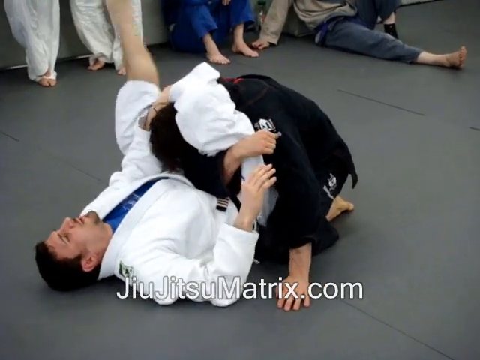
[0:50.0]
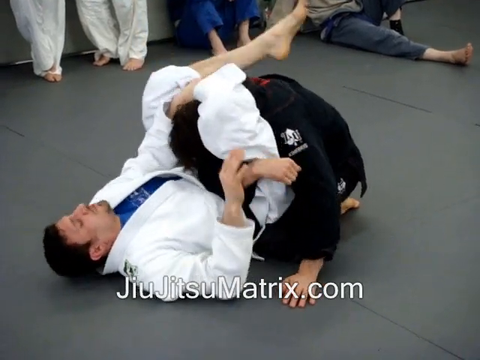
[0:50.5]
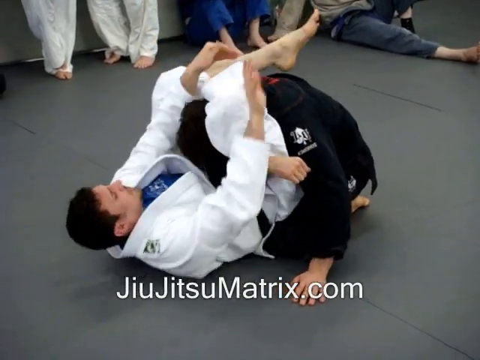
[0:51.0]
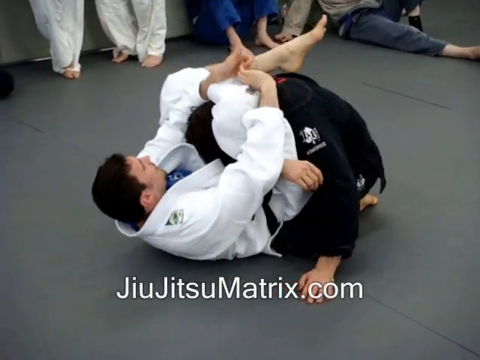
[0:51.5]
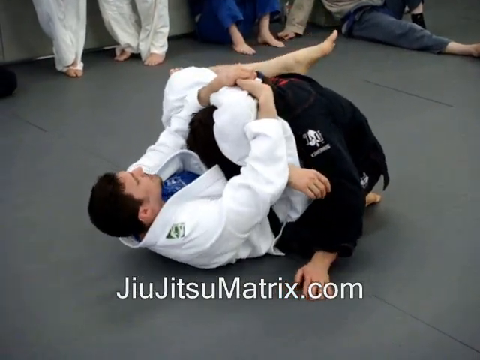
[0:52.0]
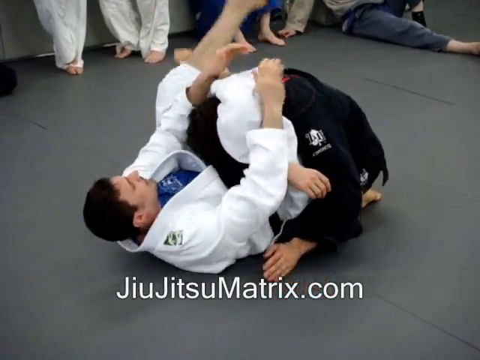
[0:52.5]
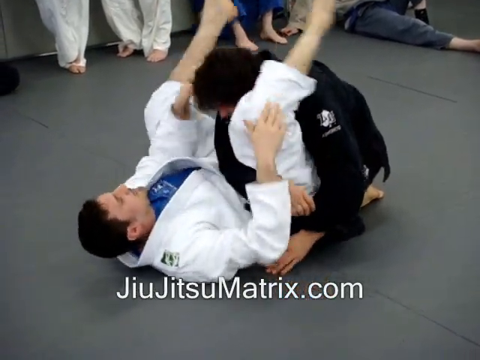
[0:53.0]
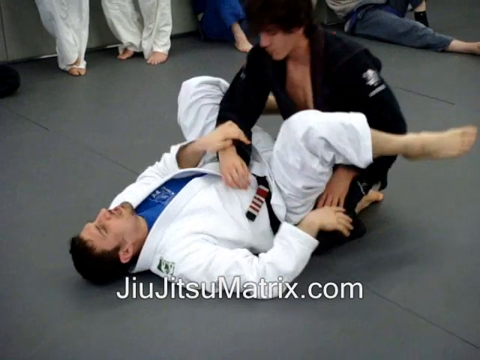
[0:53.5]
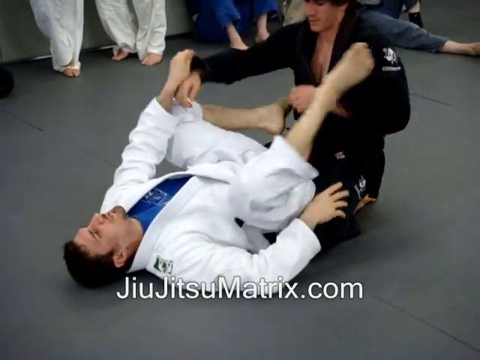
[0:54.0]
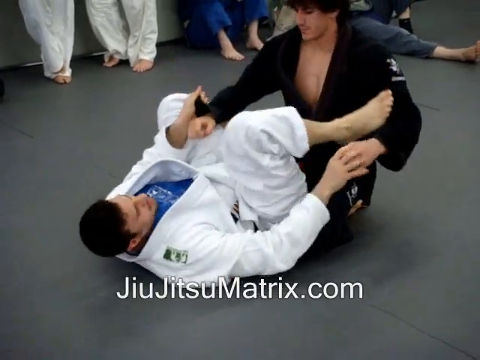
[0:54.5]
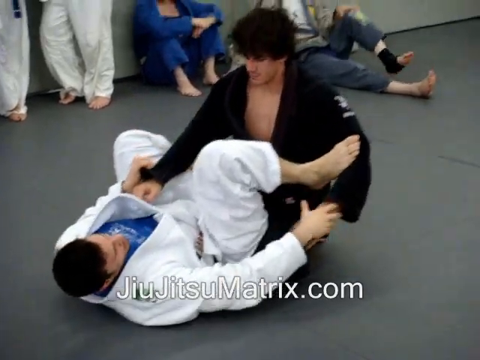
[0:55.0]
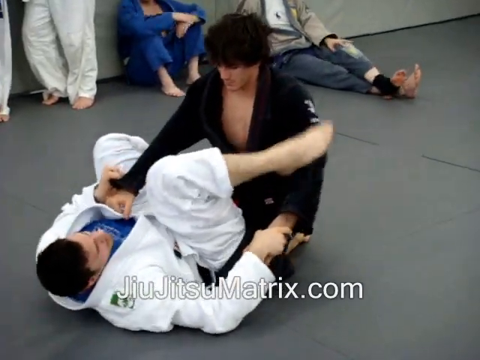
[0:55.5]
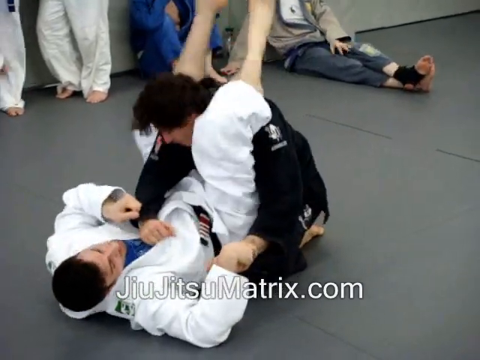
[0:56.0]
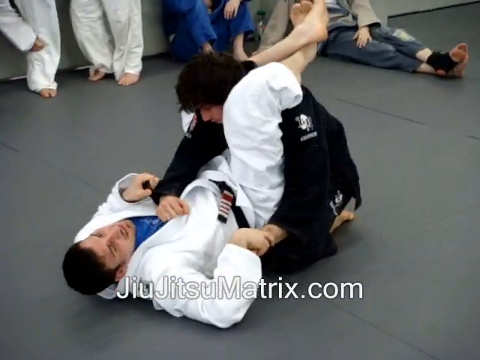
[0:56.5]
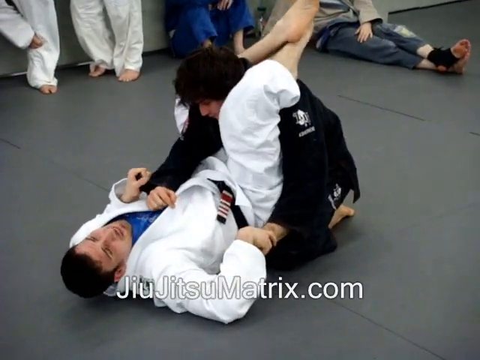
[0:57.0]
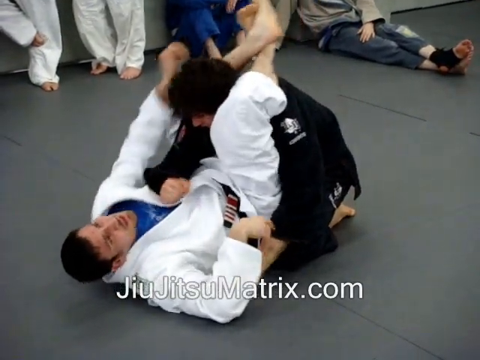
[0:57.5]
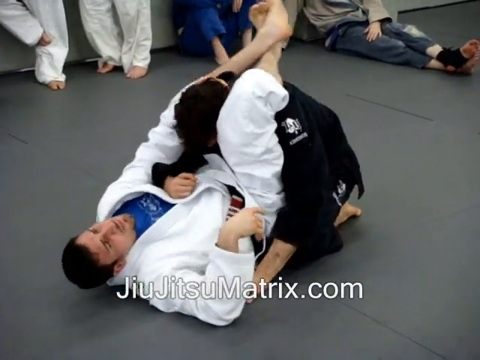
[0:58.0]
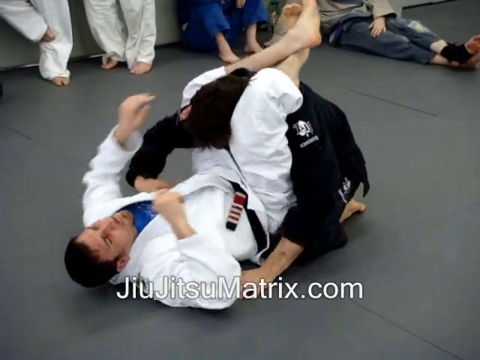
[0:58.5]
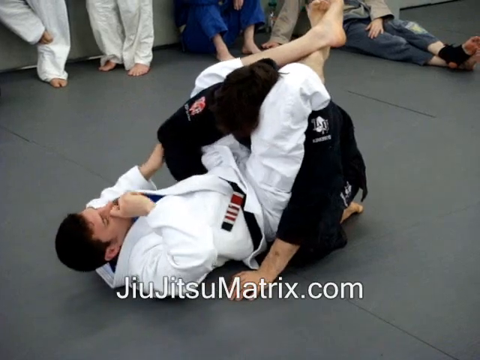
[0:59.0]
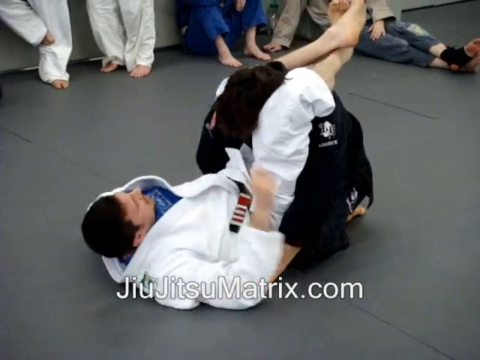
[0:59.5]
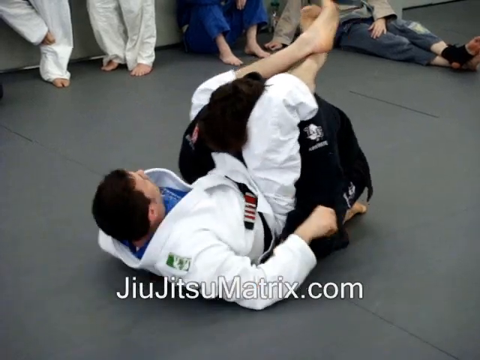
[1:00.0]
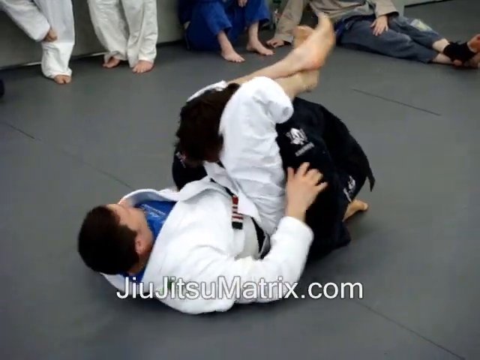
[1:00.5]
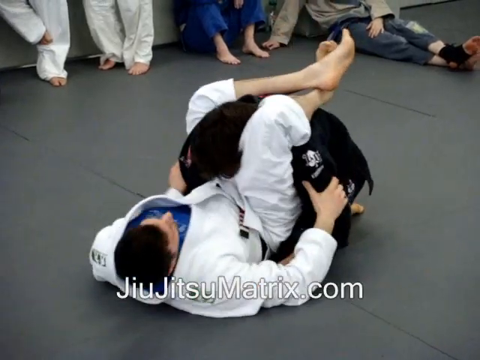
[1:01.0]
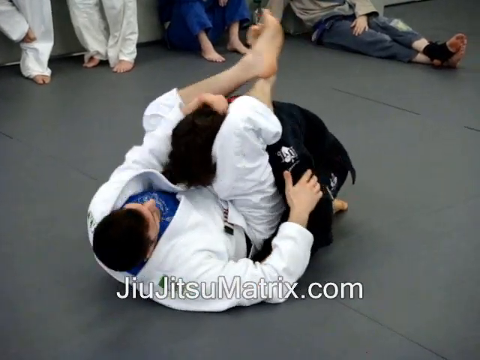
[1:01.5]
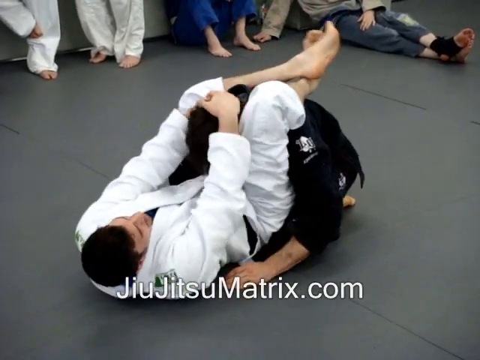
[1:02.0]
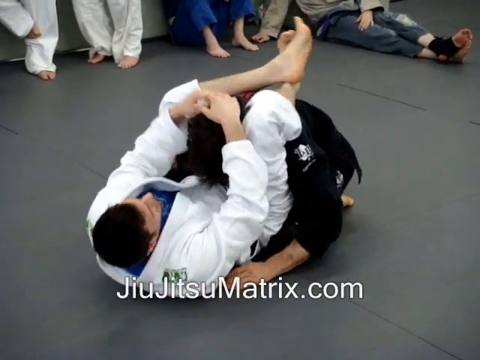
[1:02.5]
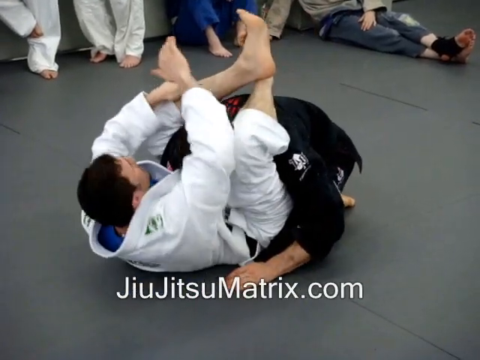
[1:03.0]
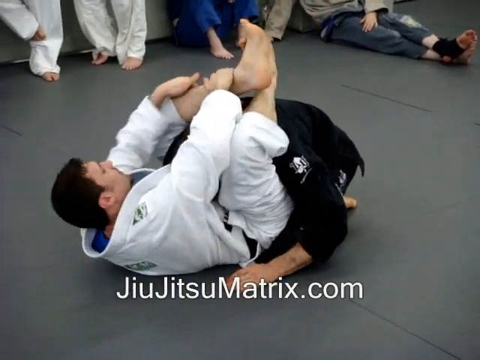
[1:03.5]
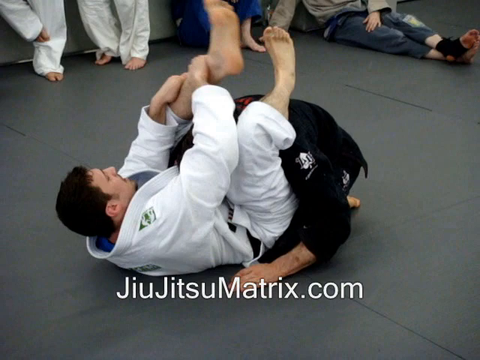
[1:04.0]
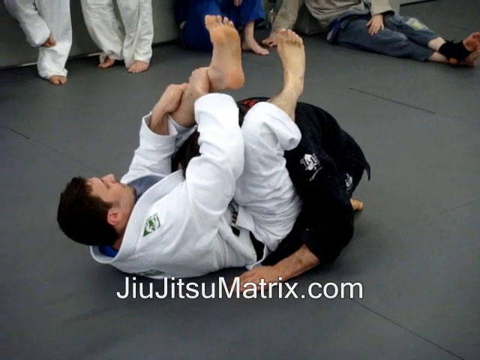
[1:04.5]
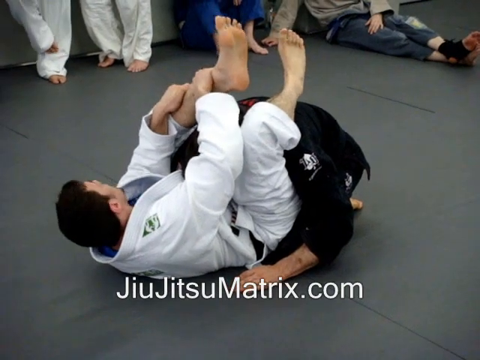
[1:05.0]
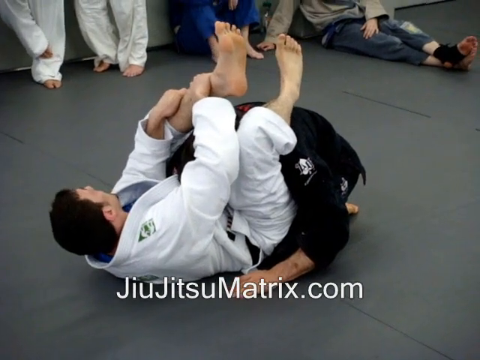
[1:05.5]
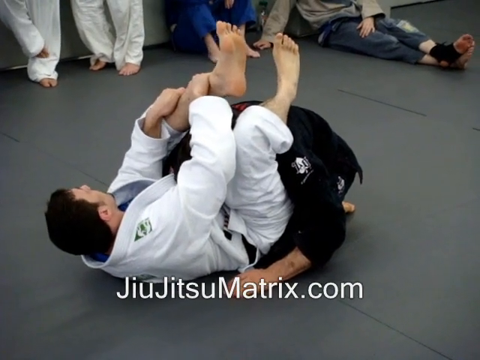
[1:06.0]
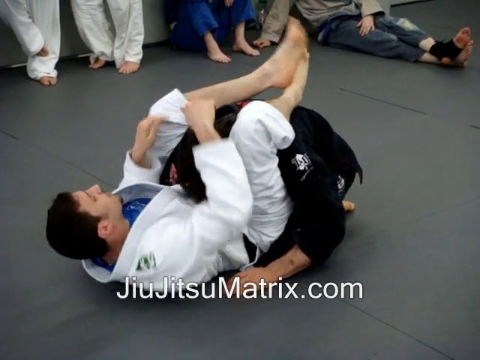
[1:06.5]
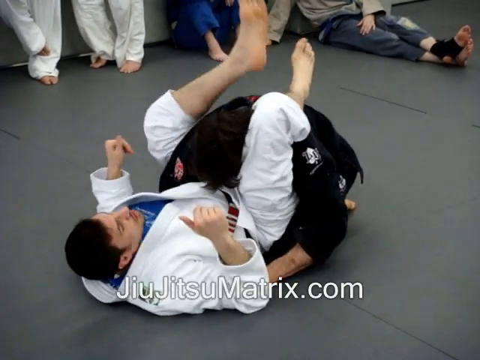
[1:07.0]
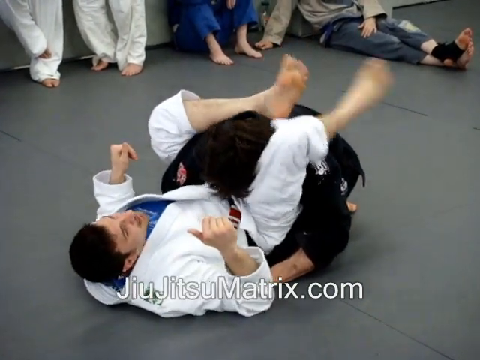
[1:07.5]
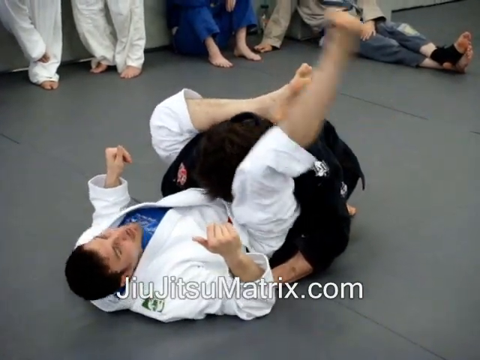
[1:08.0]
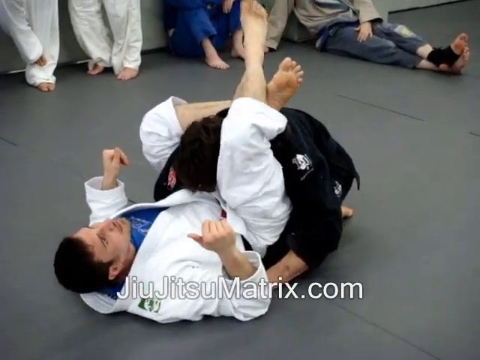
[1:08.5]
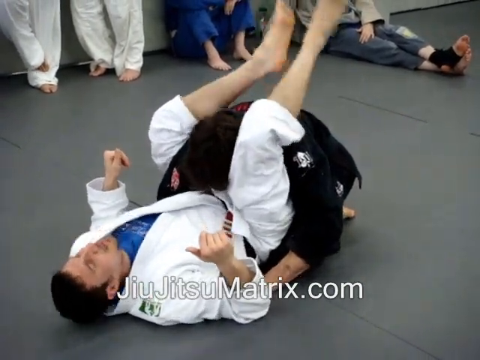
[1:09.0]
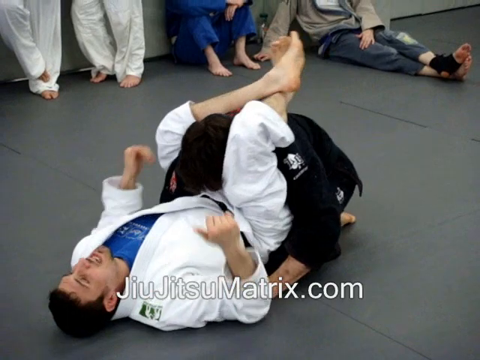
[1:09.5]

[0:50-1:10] The teacher changes the position of his legs: his right leg is now crossed to the student's neck, and his left leg holds the other leg with his knee over his ankle. He puts his hand palm out around his own right knee and grabs his fingers with his left hand, one arm around the knee and the other around the student's head. He taps the student on the head and releases the hold. The student backs up as the teacher lowers his legs, and they return to the original position and begin showing the hold again. From the neutral position, the teacher wraps his legs up and over the student's shoulders and around his neck, grabs his head, and takes his left leg, putting it behind the student's head. He then loops his right leg over his left ankle and pulls tight with his knee. Briefly, the teacher returns to the original position, with his ankles crisscrossed behind the student over his shoulders.